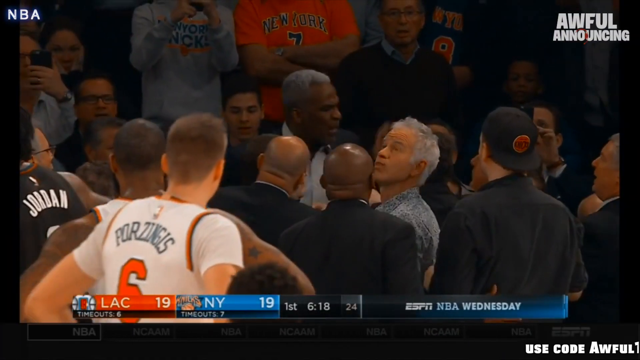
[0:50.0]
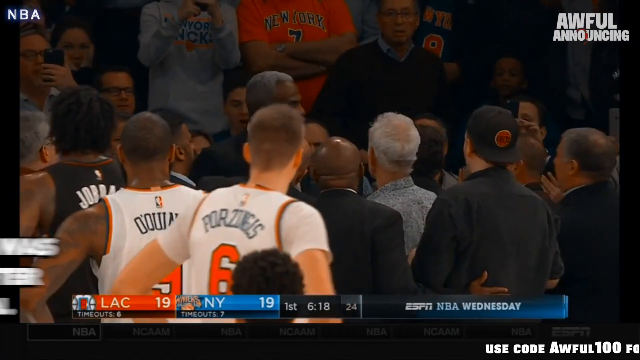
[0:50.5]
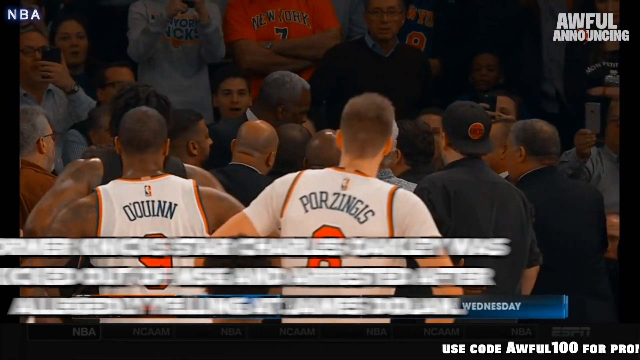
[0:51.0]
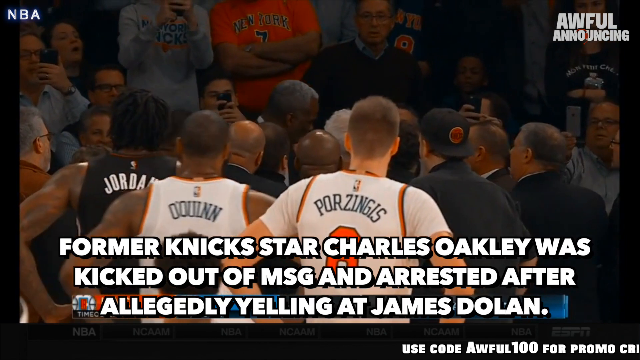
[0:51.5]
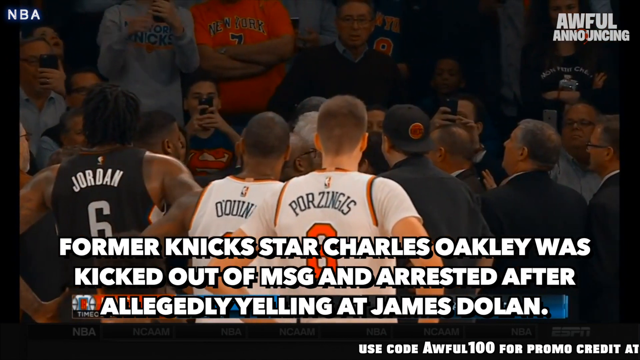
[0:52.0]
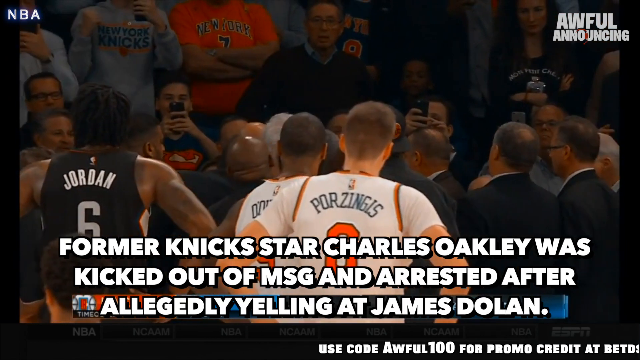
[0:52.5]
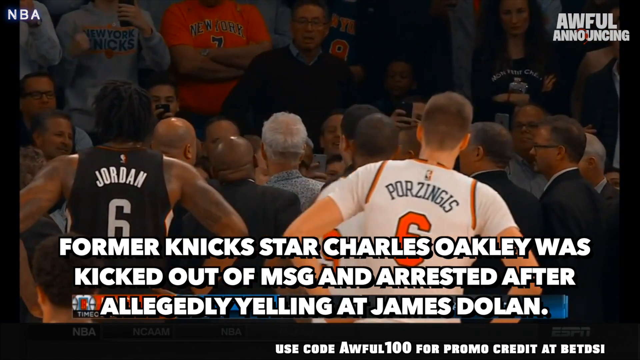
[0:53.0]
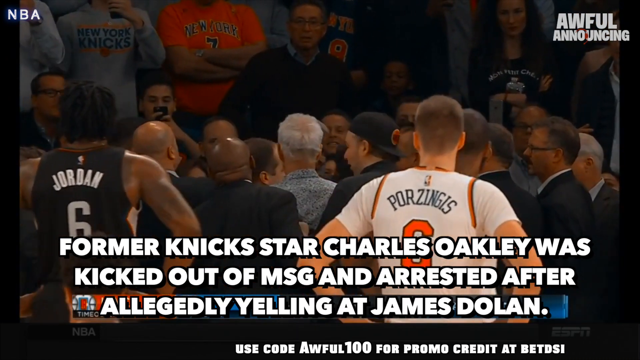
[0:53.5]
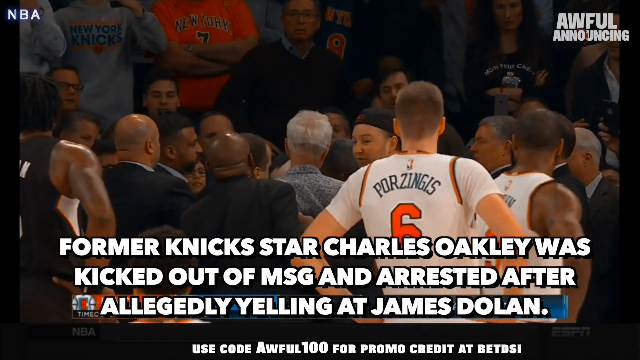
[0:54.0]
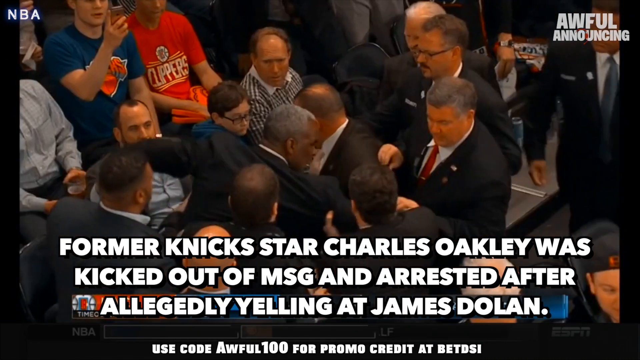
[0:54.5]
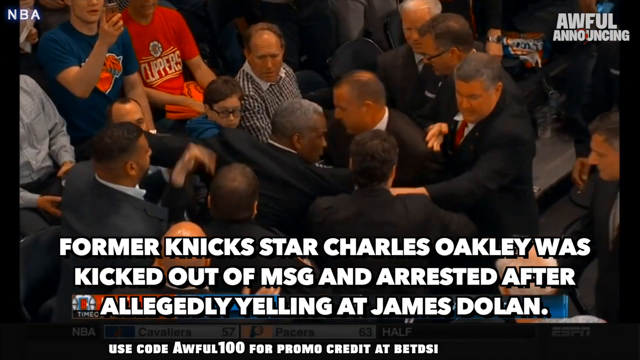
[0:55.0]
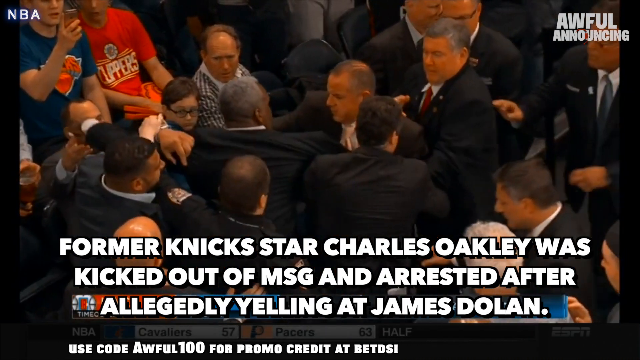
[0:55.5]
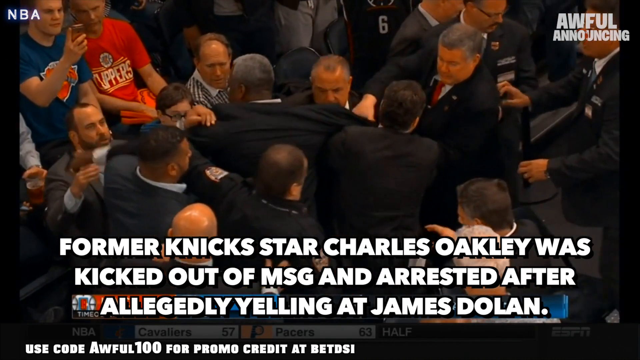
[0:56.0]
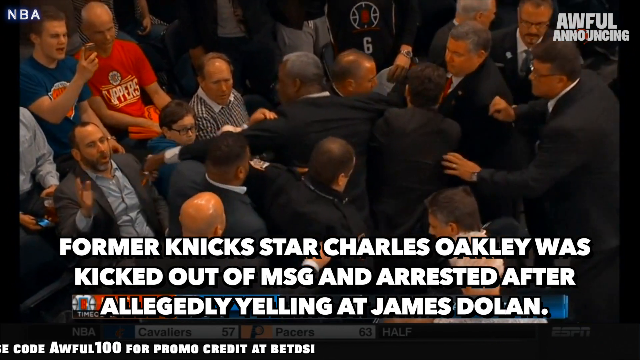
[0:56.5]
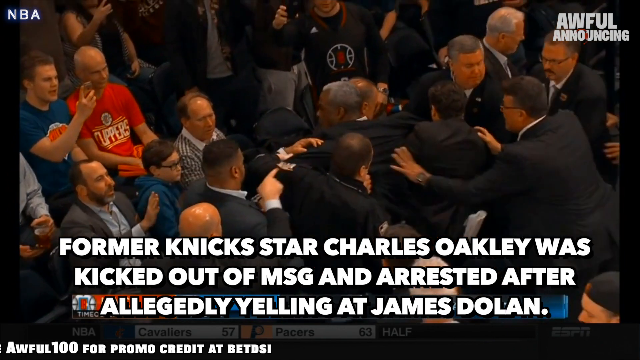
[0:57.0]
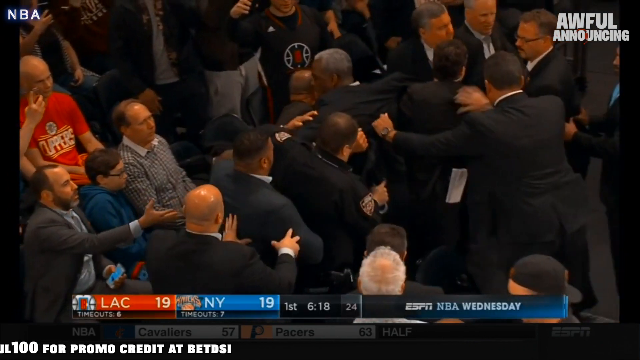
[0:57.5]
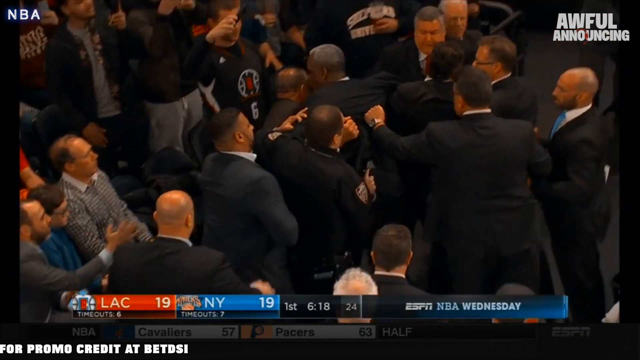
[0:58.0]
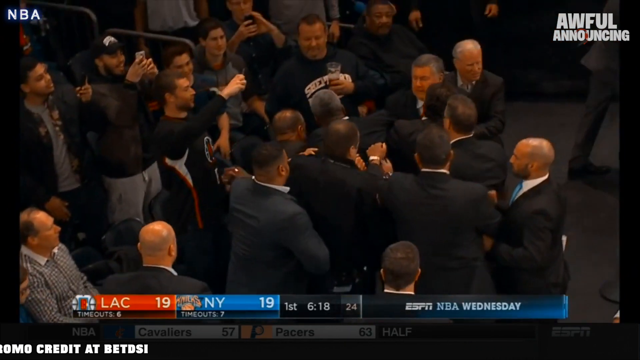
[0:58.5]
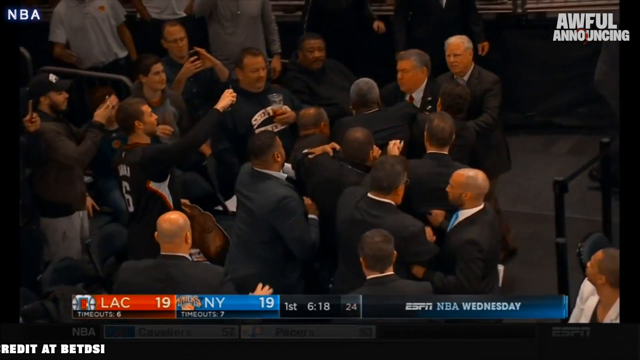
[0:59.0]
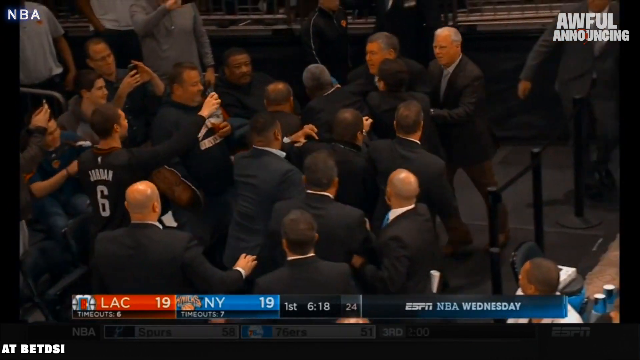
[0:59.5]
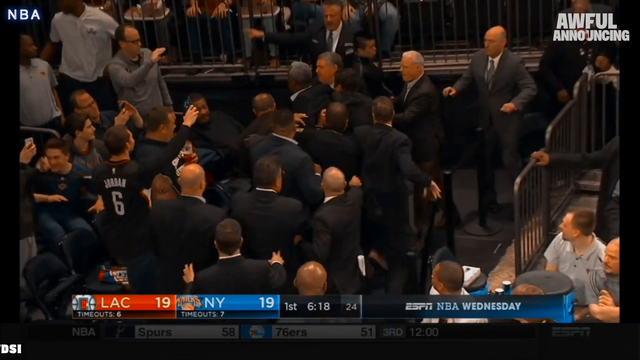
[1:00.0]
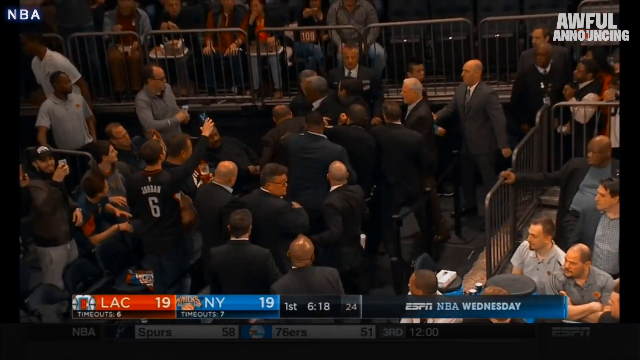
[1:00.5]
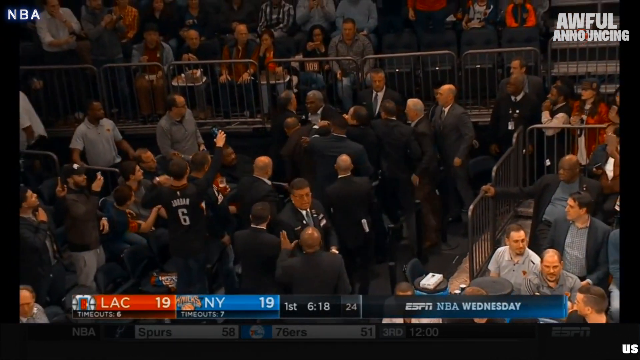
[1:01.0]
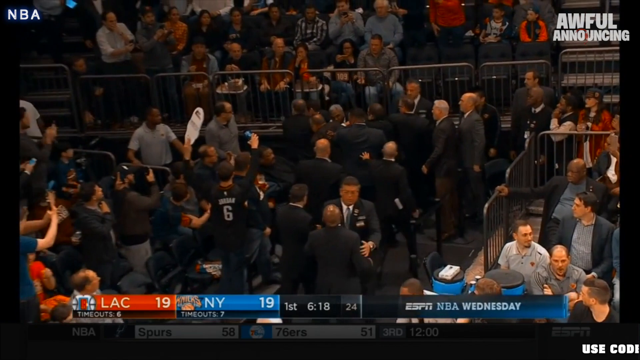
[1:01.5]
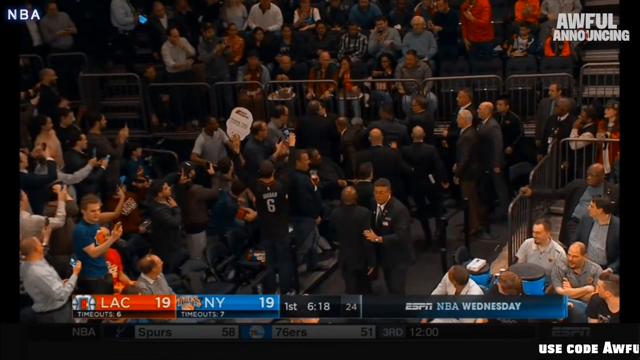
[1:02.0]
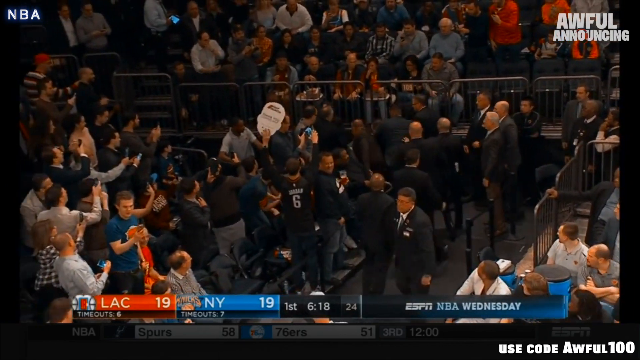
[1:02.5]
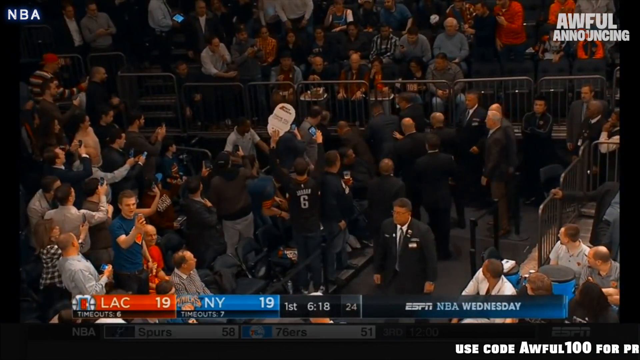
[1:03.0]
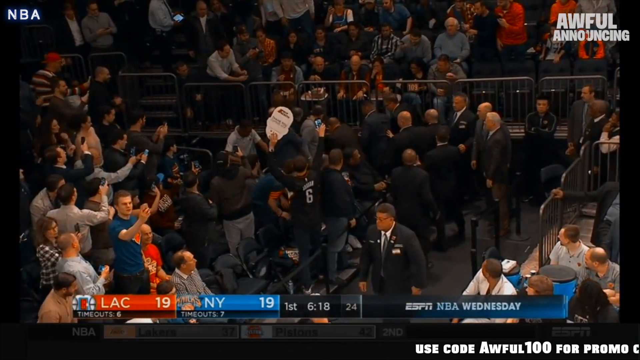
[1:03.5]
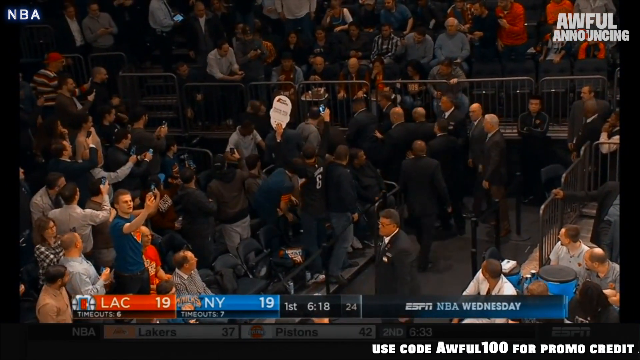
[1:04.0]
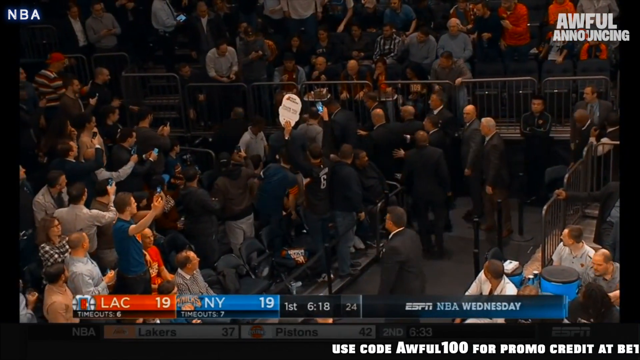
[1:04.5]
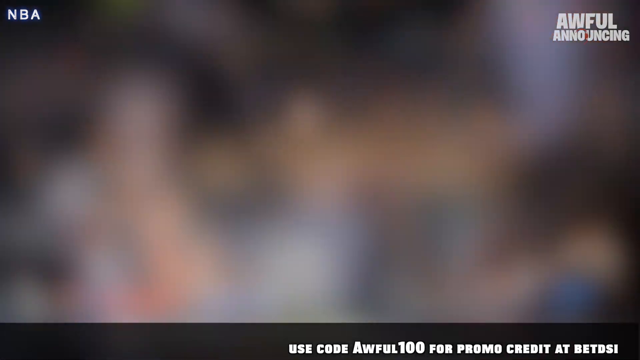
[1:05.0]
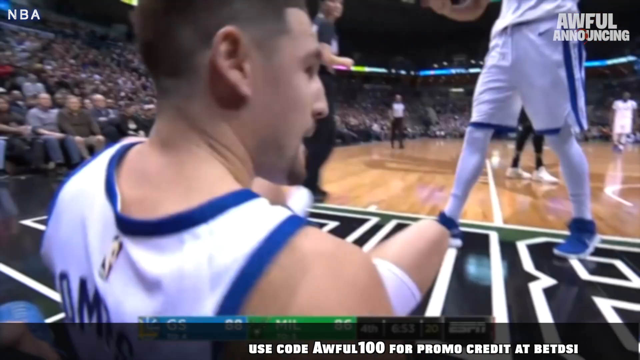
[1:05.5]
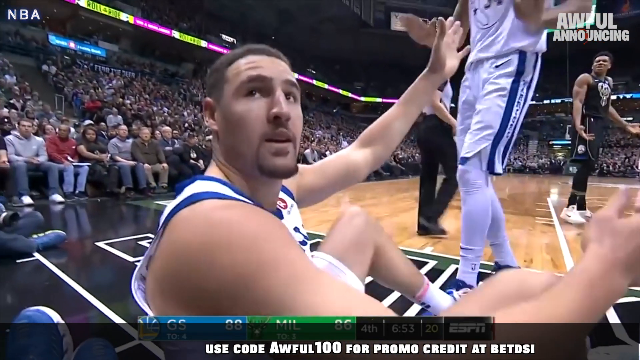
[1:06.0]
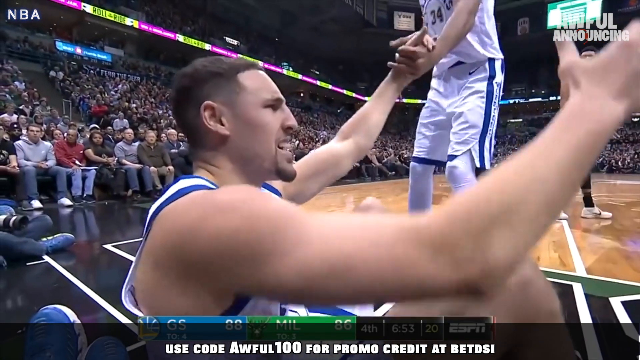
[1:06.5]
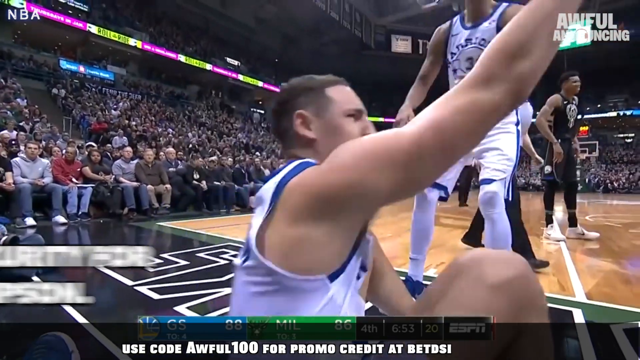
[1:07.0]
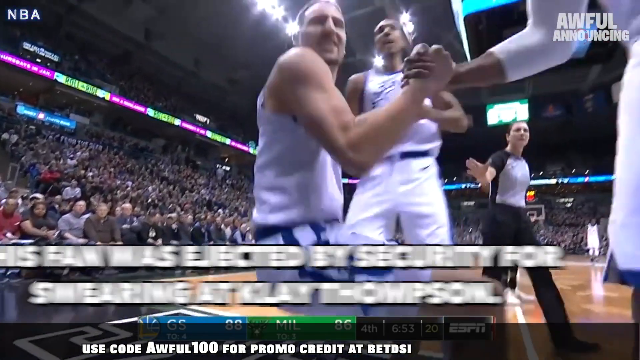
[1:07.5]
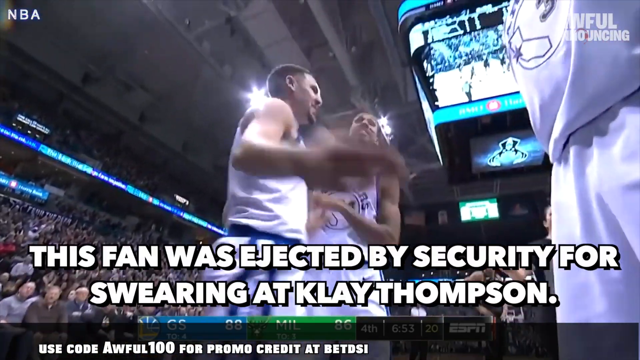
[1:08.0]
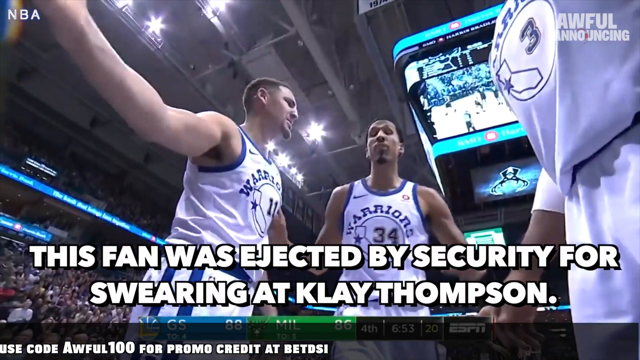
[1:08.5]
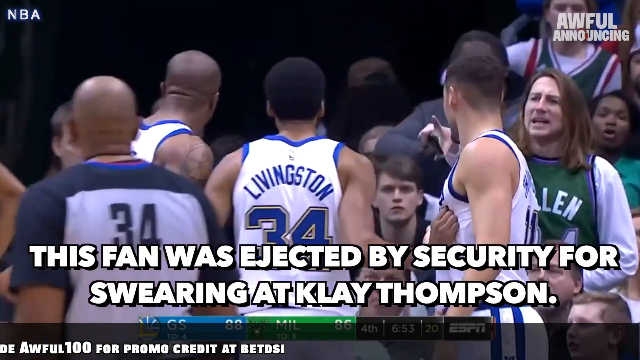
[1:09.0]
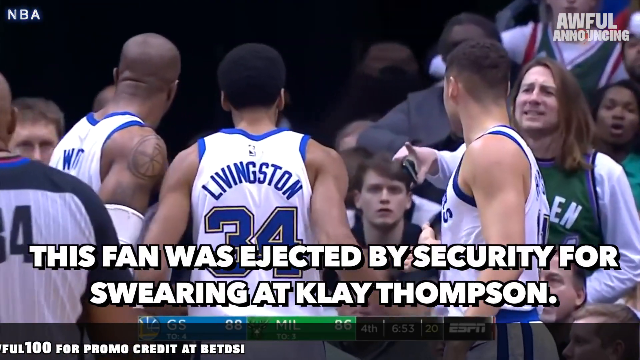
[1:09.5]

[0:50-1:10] A Black man in the stands appears in a very agitated state. Text at the bottom center of the screen reads "former Knicks star Charles Oakley was kicked out of MSG and arrested after allegedly yelling at James Dolan." He is then shown being dragged and escorted by several men wearing black and white suits. In the lower left-hand corner are the team names and scoreboard of the game, reading "LAC 19" against 19 for the other team. A game is then shown being played, with text at the bottom center reading "this fan was ejected by security for swearing at Klay Thompson." The entire video is rectangular, filmed indoors with a good amount of artificial light so everything is clear and visible.